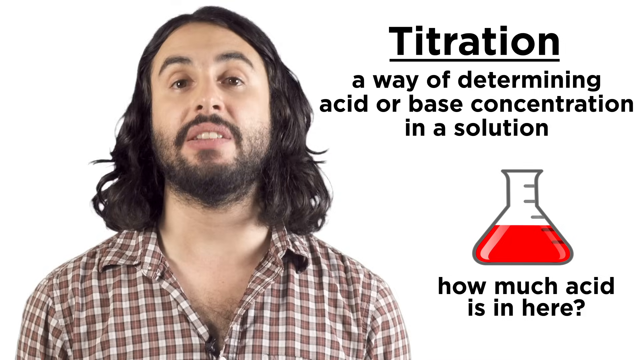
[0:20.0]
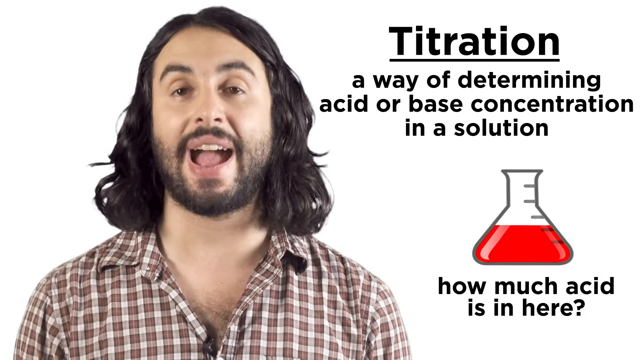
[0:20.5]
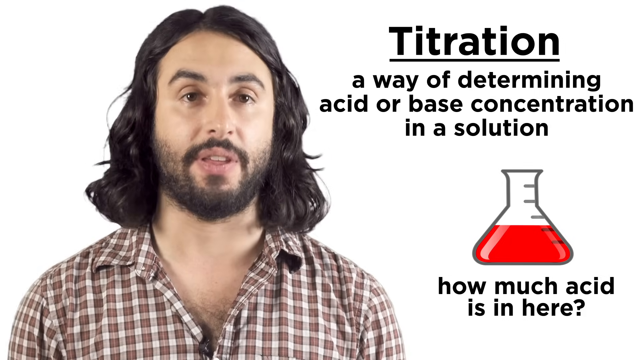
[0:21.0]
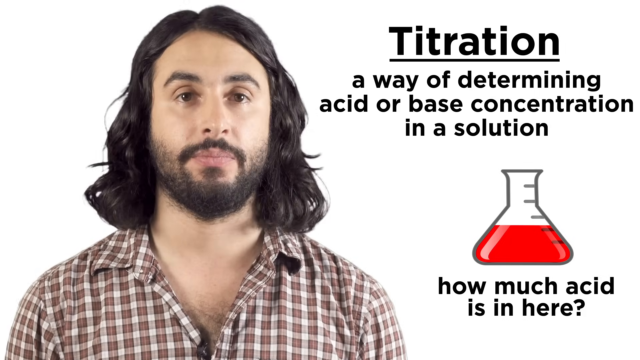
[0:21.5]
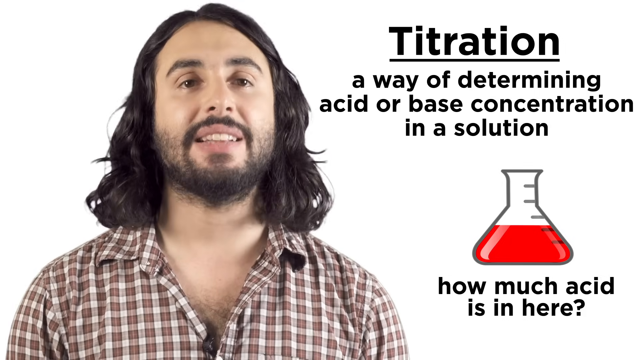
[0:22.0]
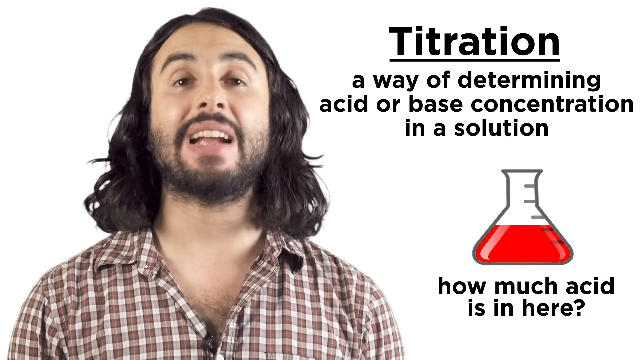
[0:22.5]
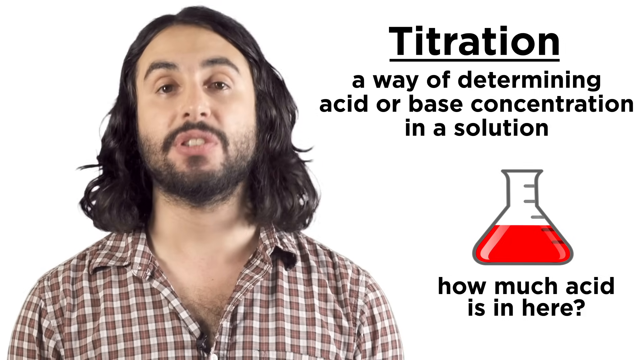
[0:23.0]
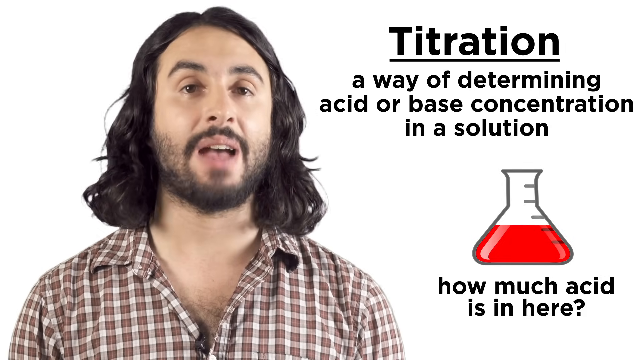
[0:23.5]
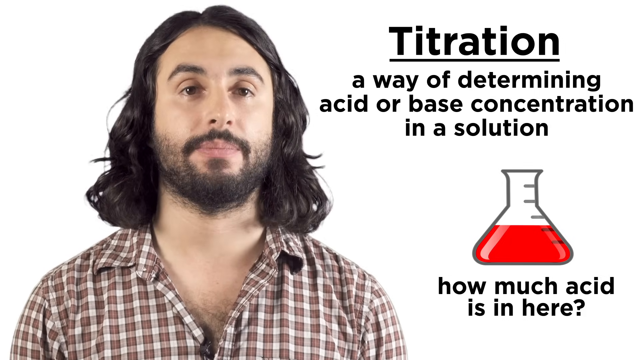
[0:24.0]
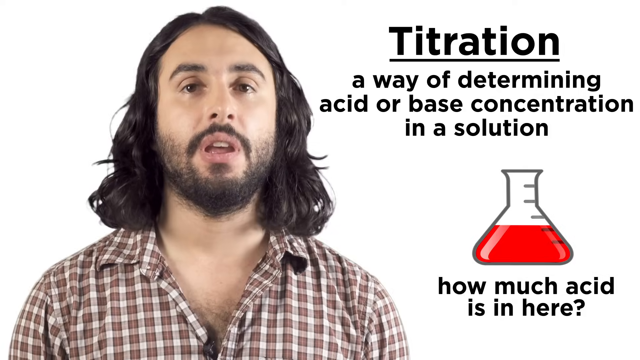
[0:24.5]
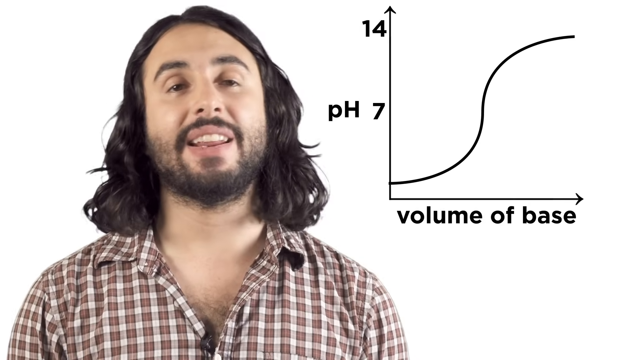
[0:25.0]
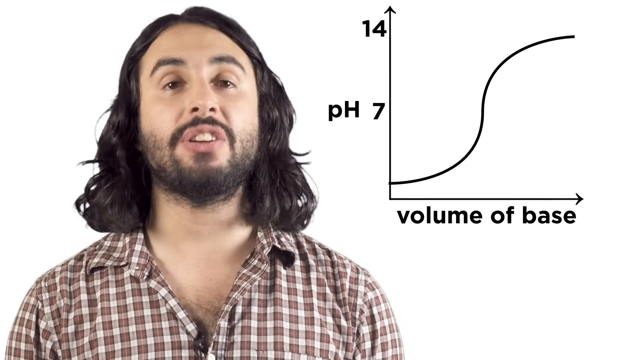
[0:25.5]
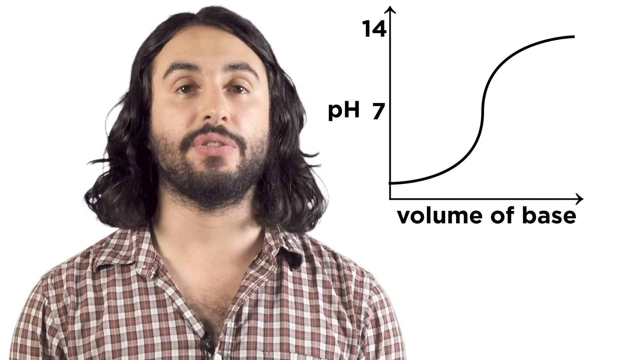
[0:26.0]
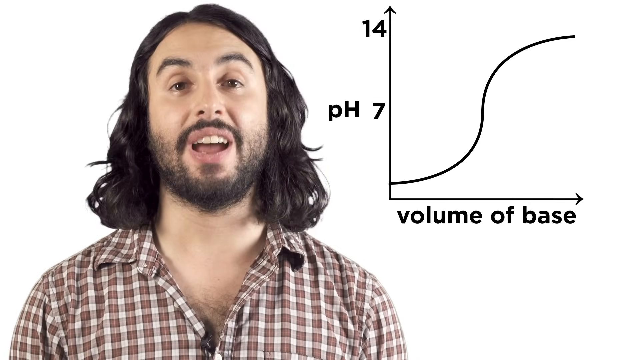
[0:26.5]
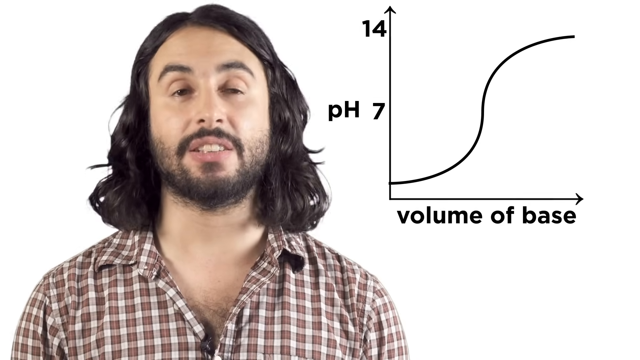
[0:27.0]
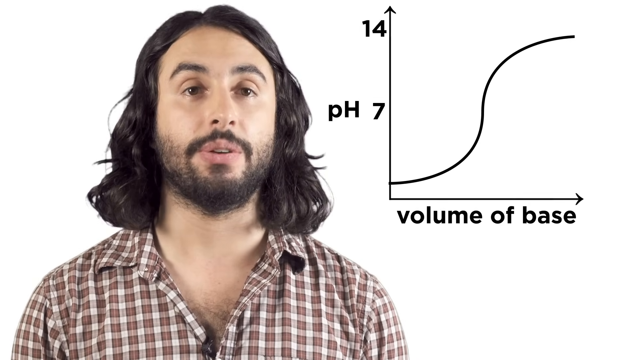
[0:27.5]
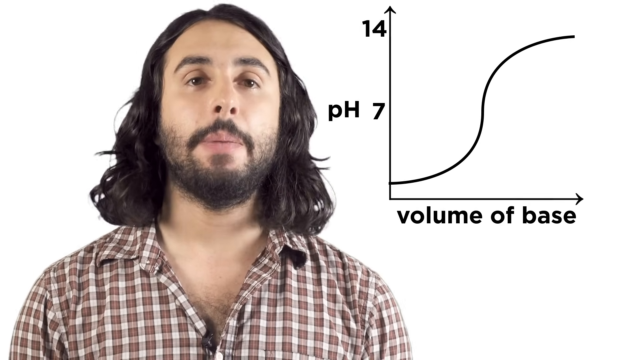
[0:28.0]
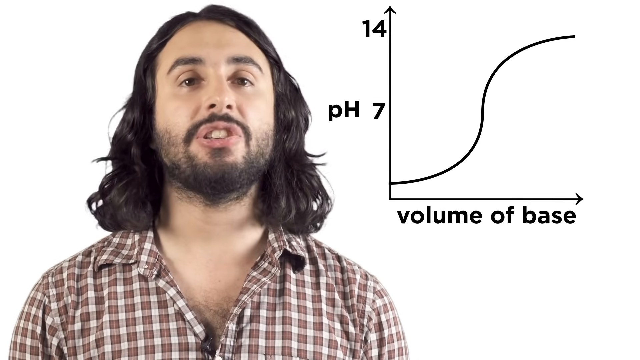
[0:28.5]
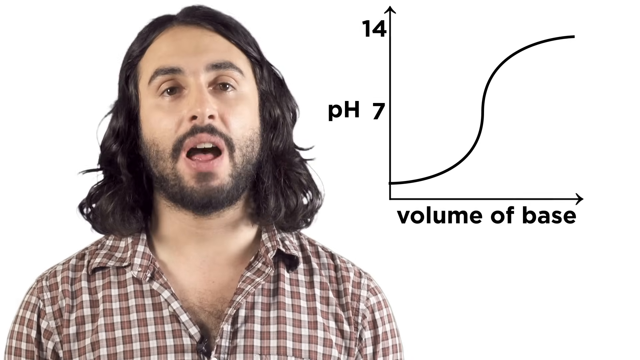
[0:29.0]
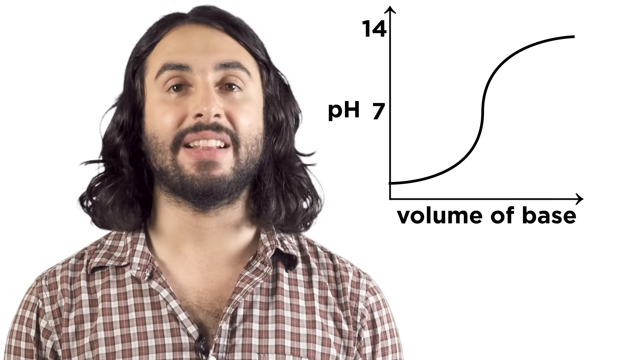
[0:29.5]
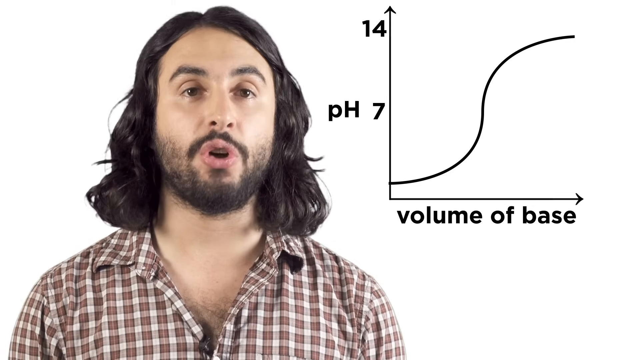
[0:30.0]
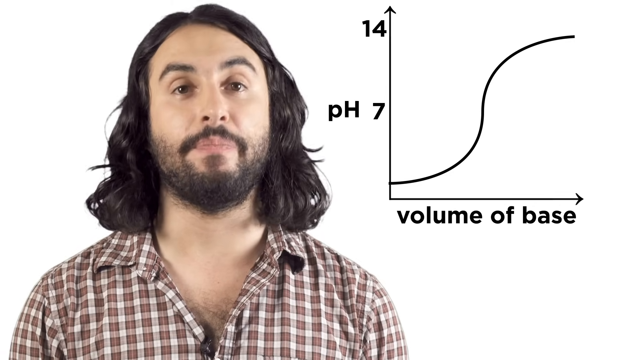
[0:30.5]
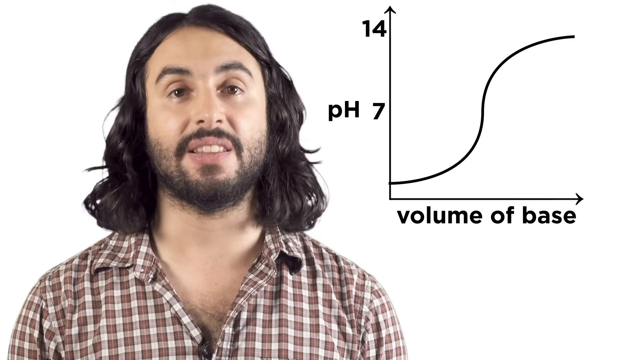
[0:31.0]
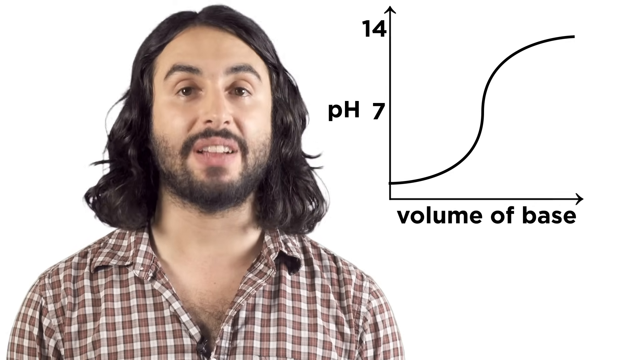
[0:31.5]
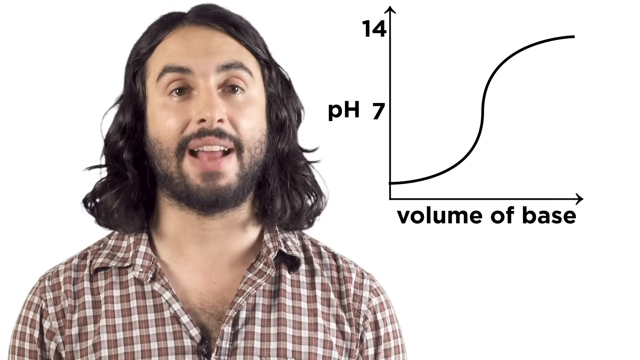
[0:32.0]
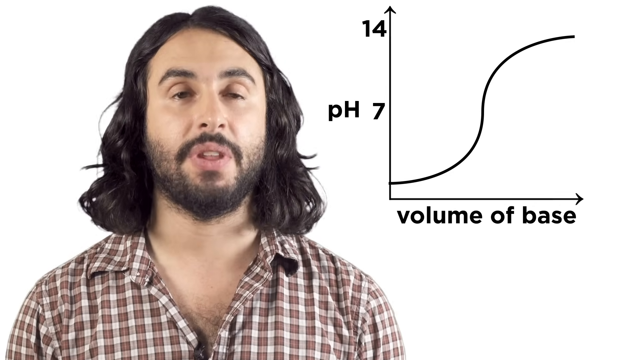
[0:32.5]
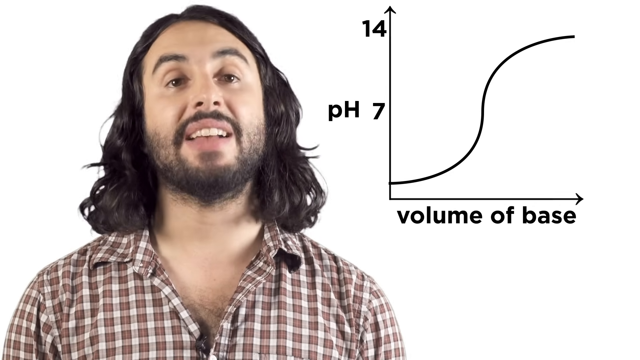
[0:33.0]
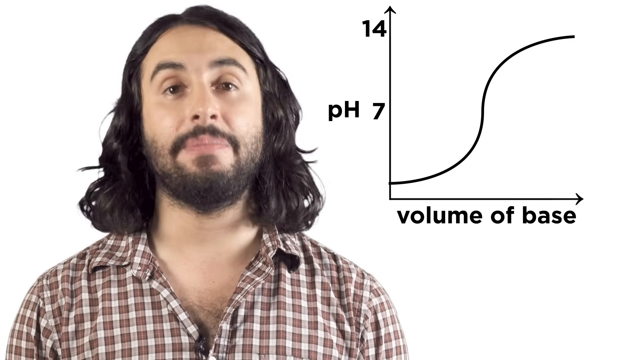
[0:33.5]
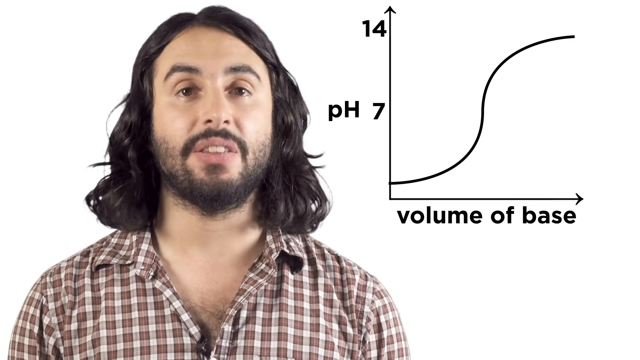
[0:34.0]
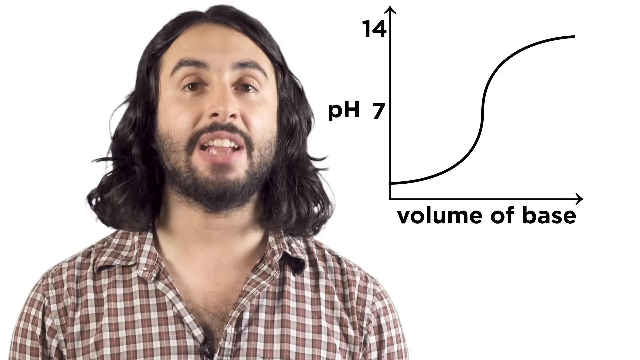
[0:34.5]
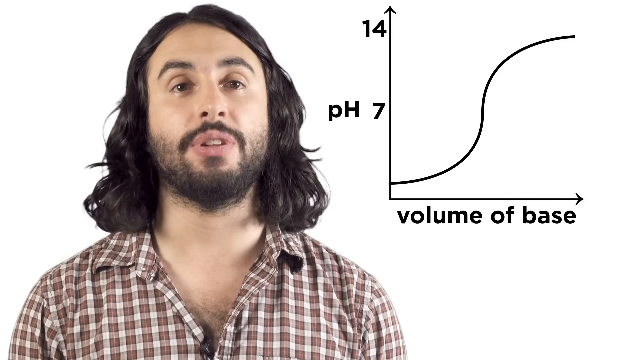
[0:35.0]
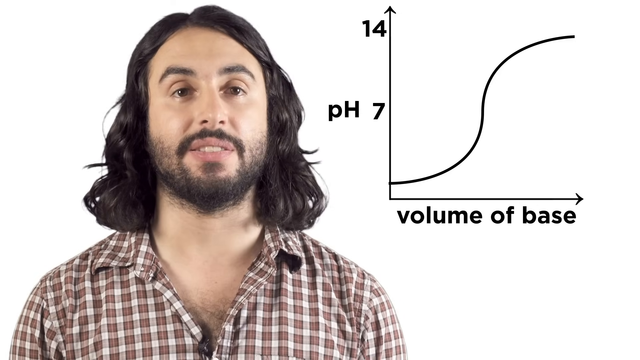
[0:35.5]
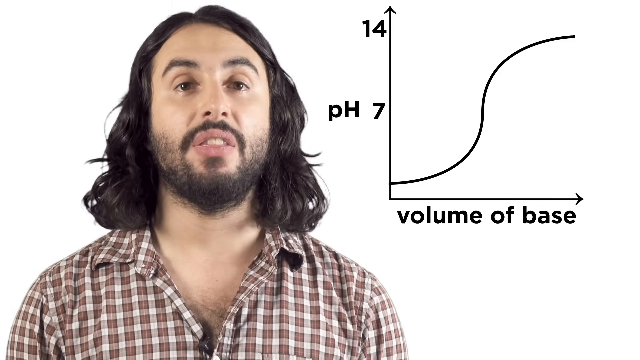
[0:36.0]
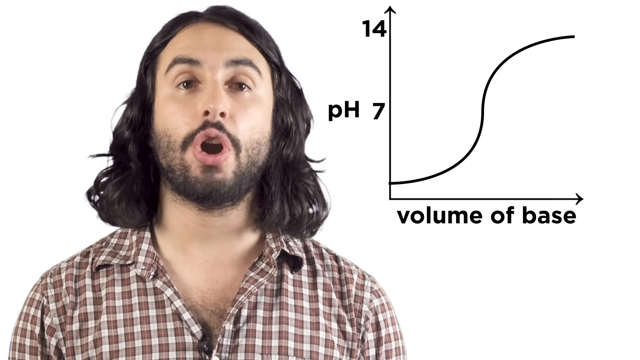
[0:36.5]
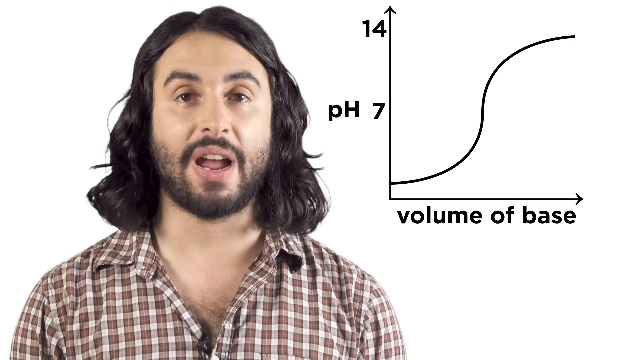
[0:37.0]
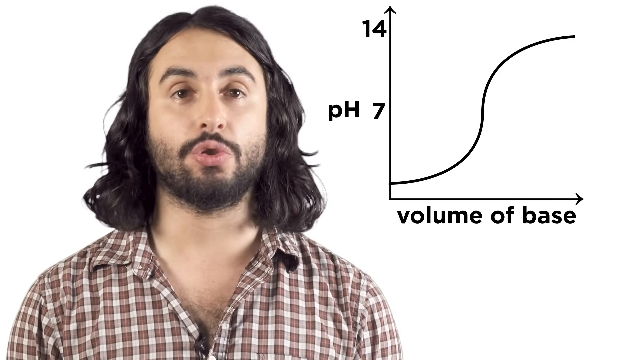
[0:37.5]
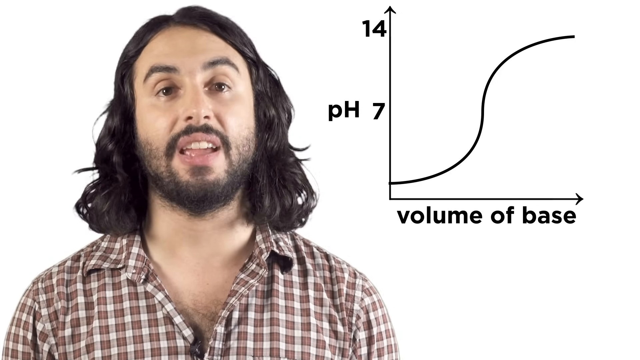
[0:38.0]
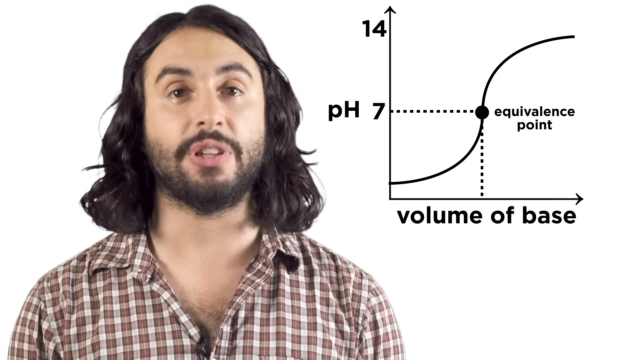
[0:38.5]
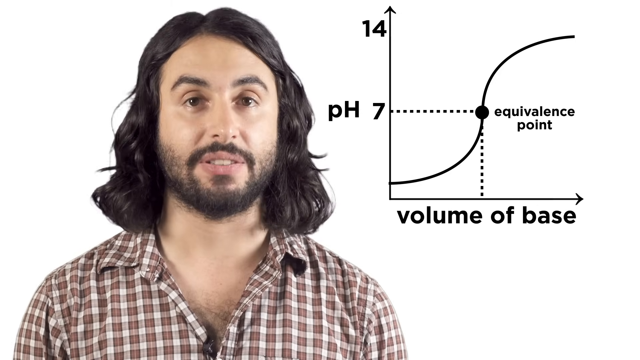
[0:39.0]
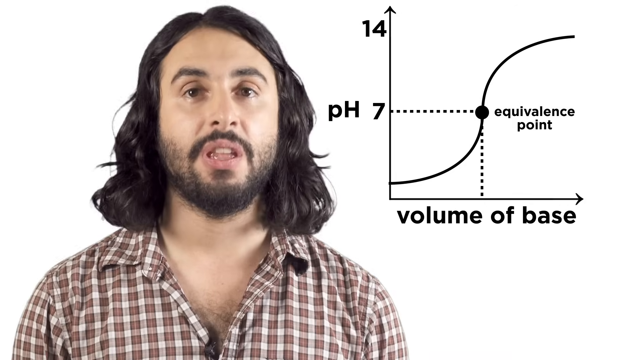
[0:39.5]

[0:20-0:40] The man in the checked shirt, with long black hair, faces the camera from close up and speaks with emphasis, apparently explaining what is shown on the screen. Beside him the text reads "titration, a way of determining acid or base concentration in a solution". There is acid shown with measurement lines that apparently indicate how much acid there is. Later a graph appears with two axes: the horizontal one has 14 and pH 7, and the vertical one reads "volume of base". The man explains the graph. Dotted lines then appear, running from pH 7 to the volume of base at a 90-degree angle, labeled "equivalent point", while he keeps explaining.